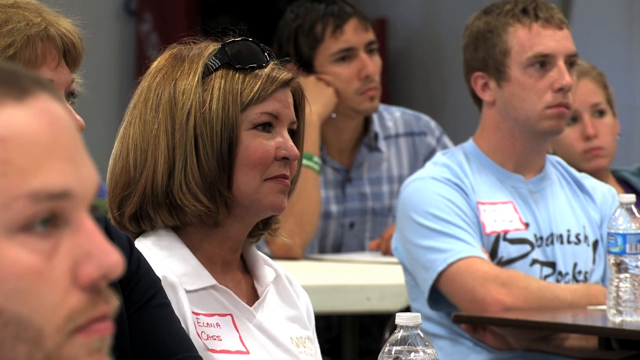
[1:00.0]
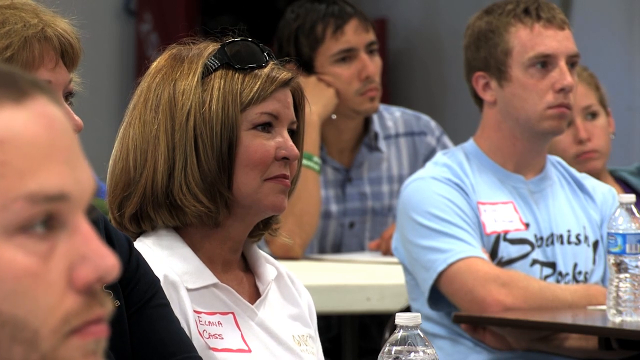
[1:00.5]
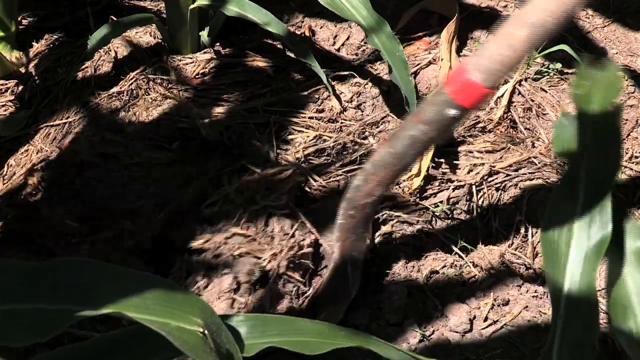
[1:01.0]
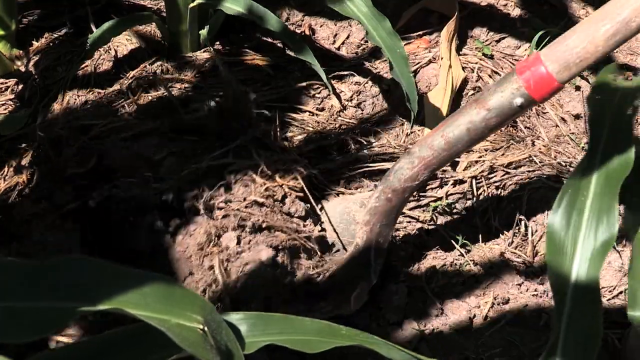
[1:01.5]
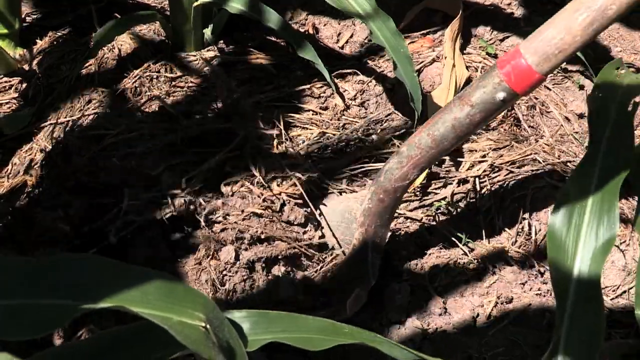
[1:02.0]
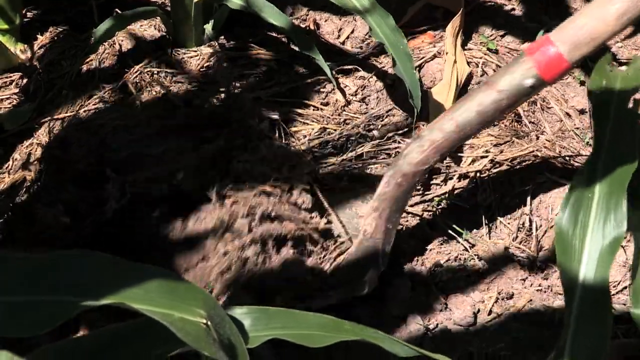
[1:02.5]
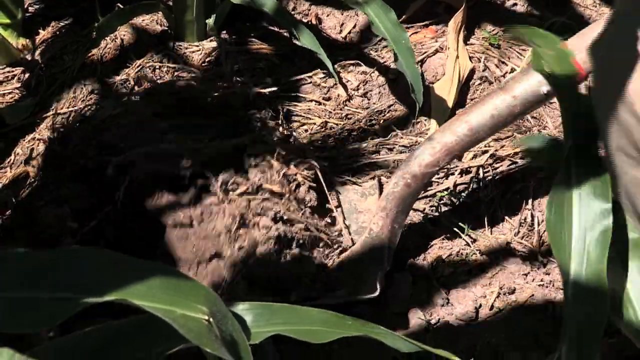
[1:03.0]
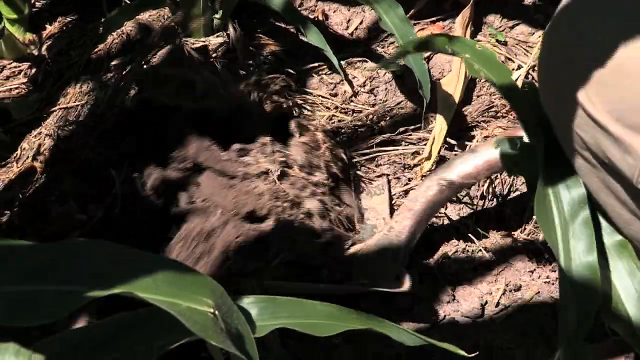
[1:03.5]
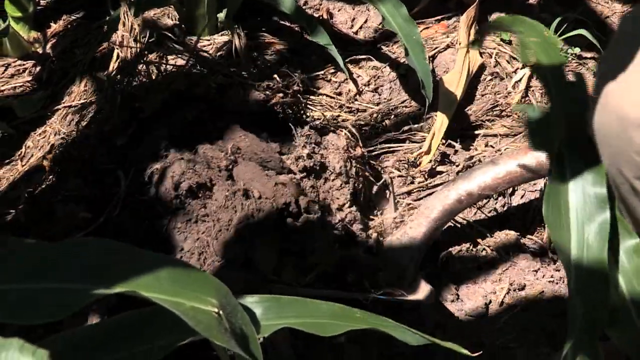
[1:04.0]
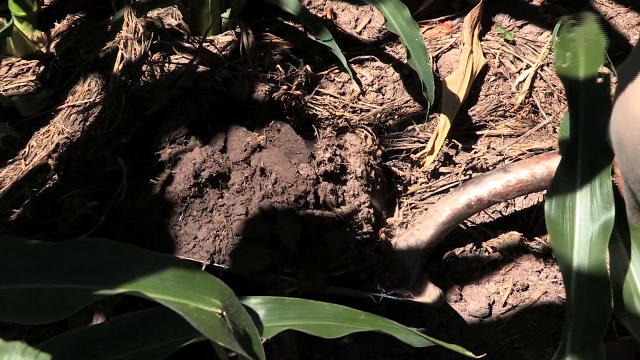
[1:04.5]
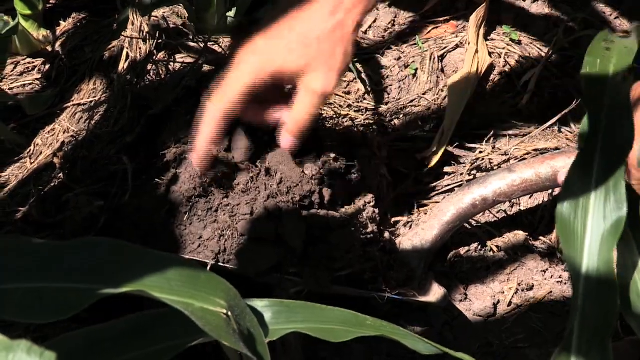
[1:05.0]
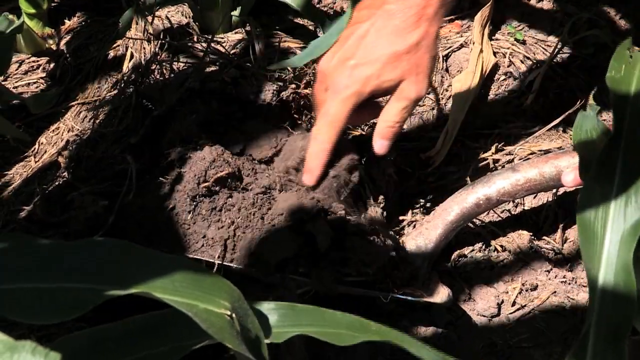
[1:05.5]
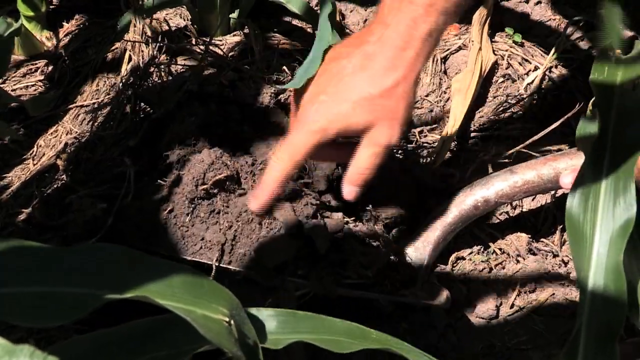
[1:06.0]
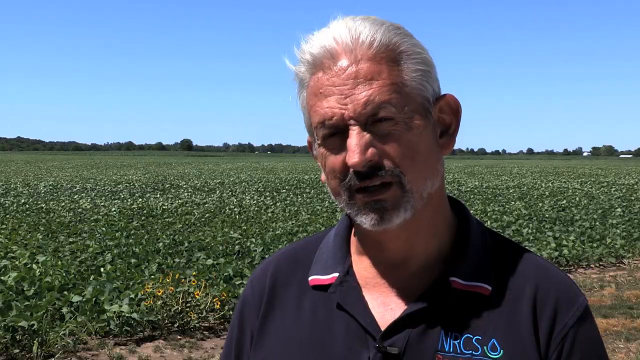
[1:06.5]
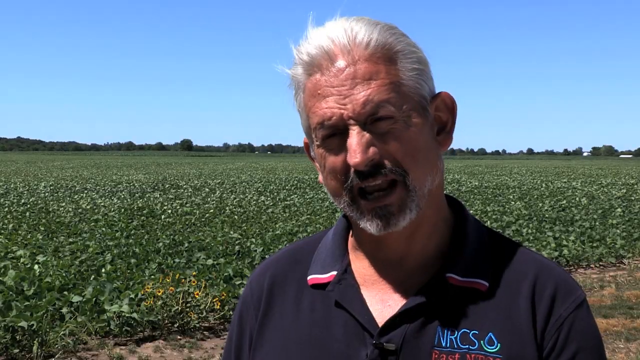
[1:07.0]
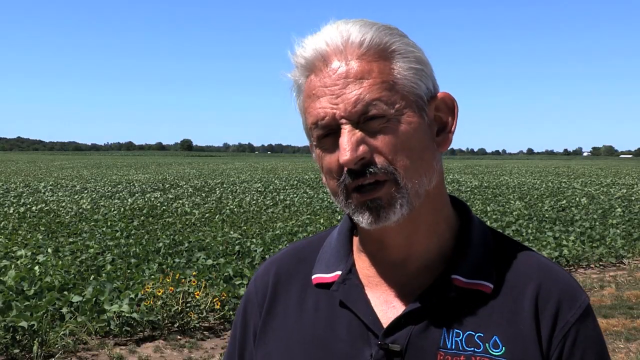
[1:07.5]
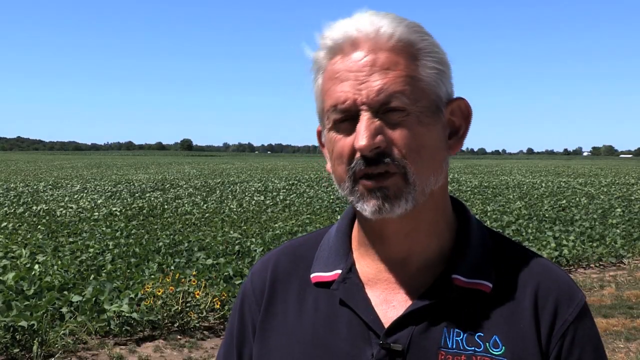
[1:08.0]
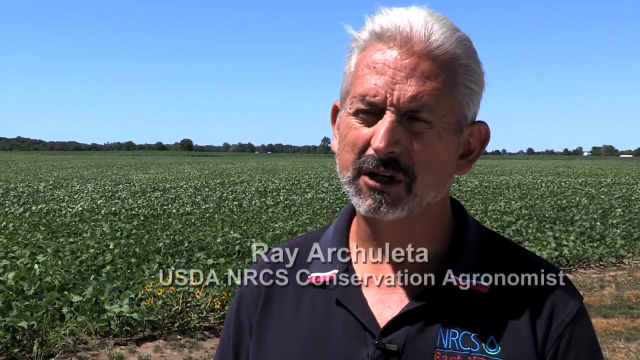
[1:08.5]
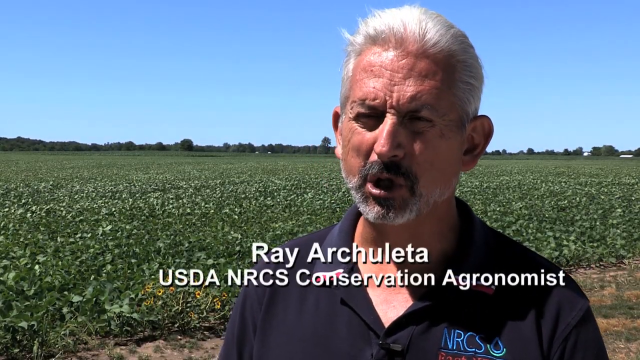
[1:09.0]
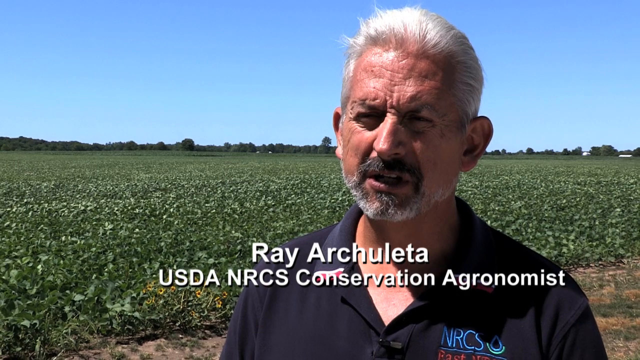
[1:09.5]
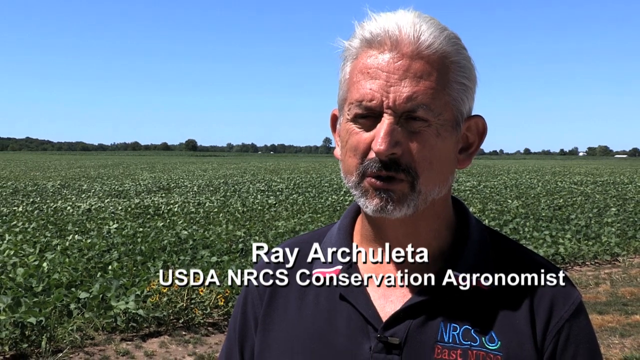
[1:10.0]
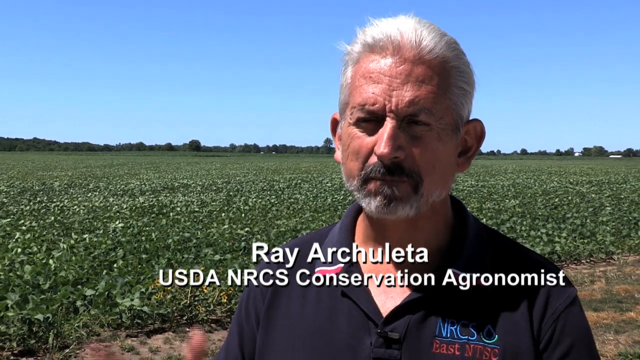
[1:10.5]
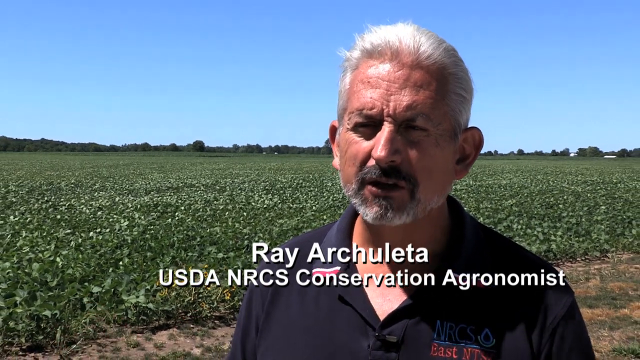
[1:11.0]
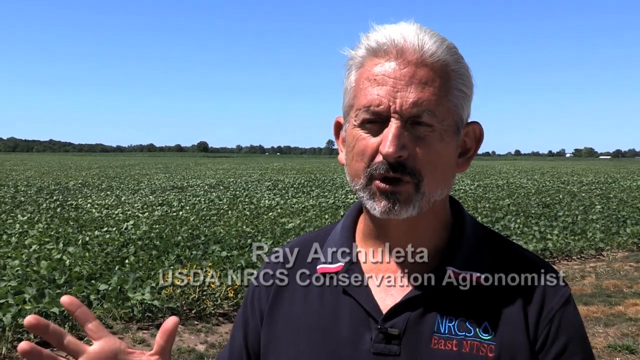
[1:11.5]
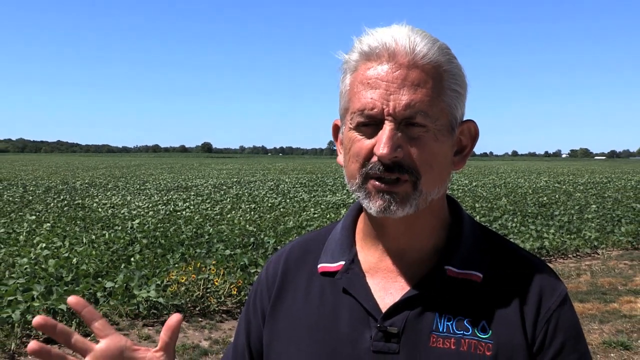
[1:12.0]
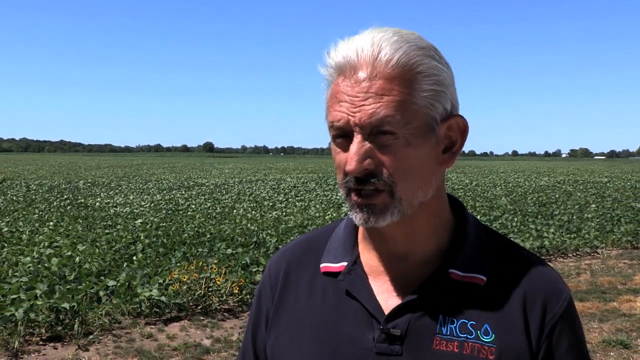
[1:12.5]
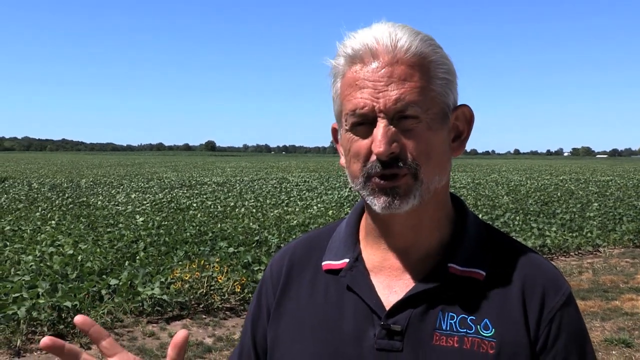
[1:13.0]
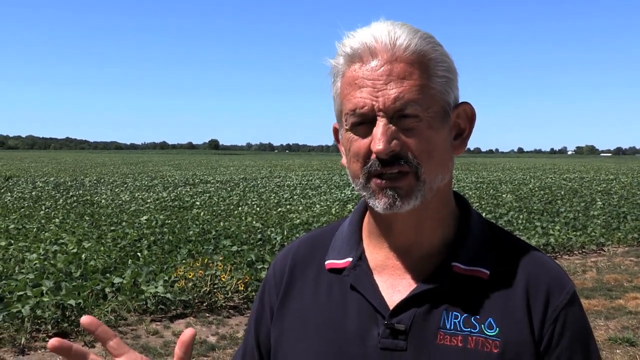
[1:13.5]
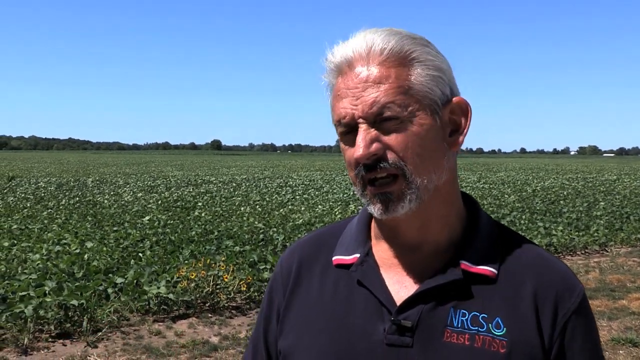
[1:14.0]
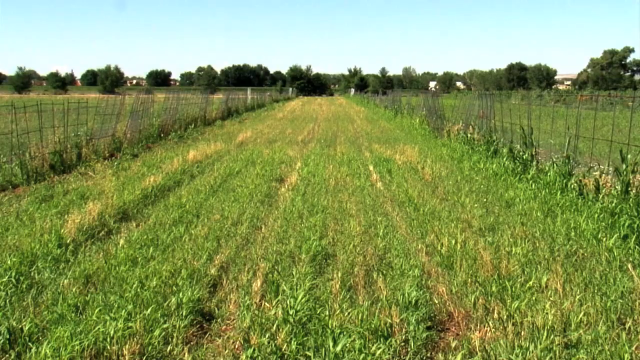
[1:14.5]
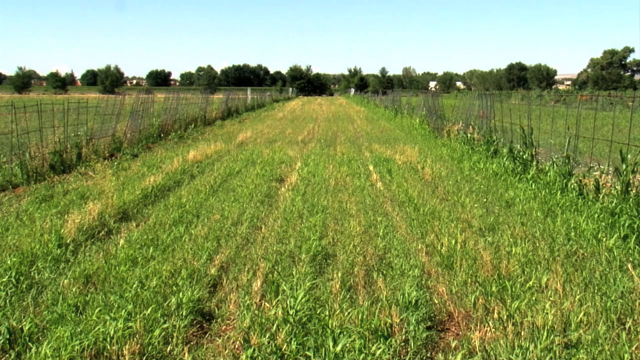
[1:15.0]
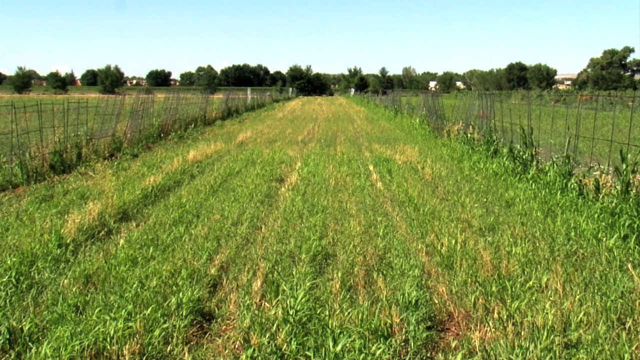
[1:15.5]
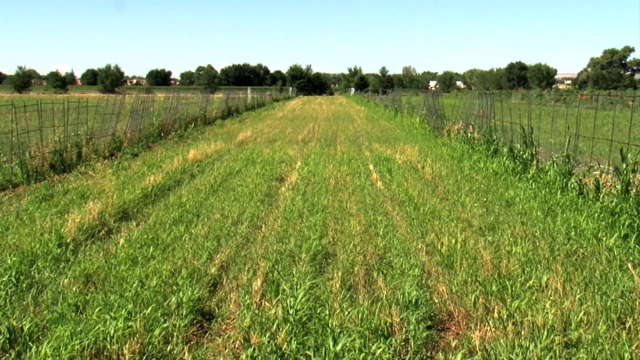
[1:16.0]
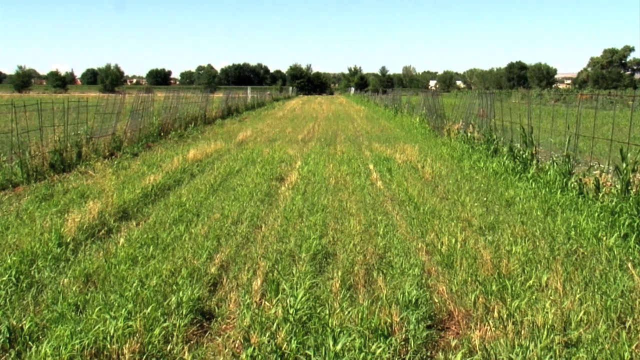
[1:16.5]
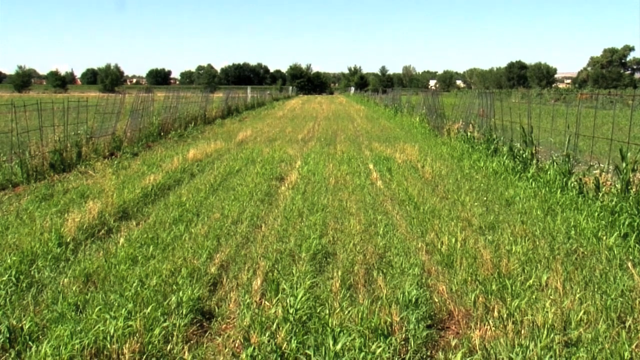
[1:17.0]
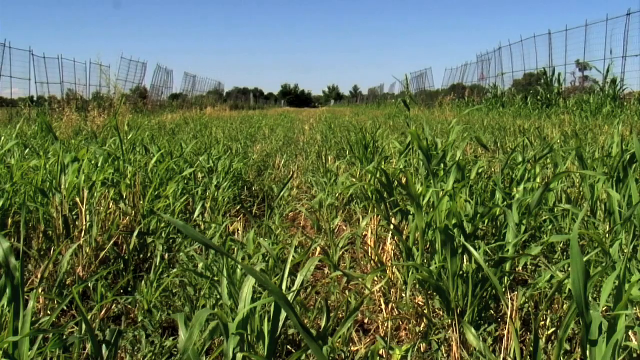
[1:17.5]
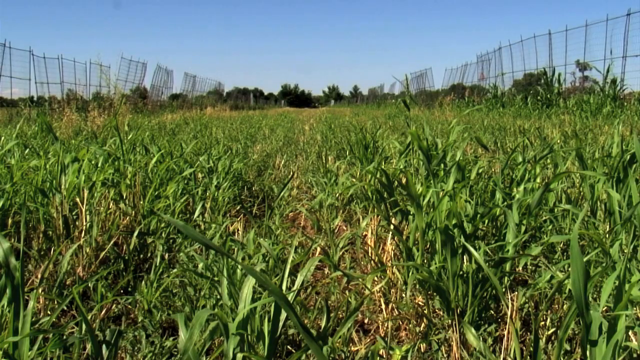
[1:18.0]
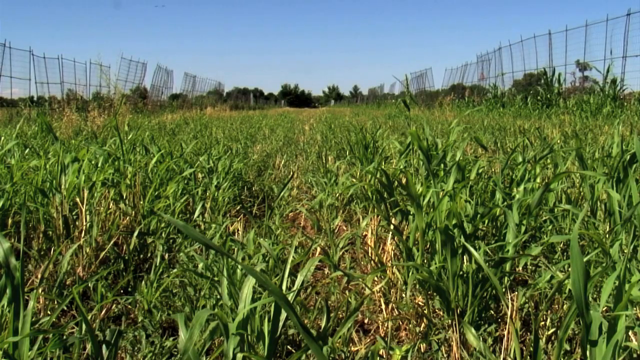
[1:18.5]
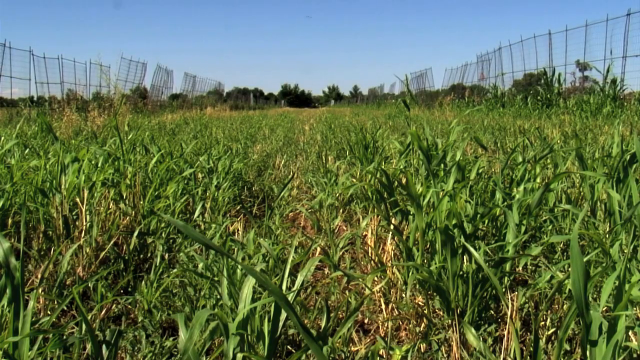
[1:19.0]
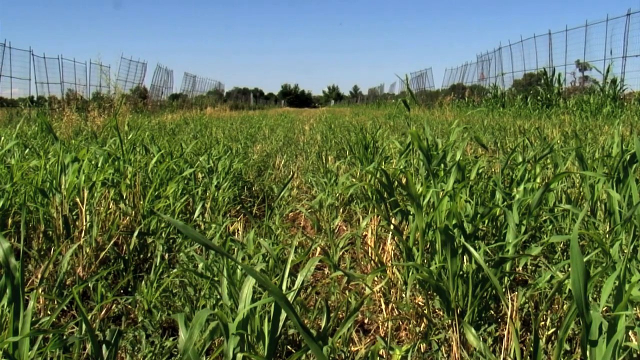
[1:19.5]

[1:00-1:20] The camera cuts to a person digging the ground with a shovel, looking for something like a worm. A person identified as Heia Archuleta, USDA NRCS Conservation Agronomist, appears; he has white hair, looks very experienced, and talks in the middle of the cornfield. The camera then cuts to a cornfield that is green and a little yellowish under strong sun, with the plants very still.